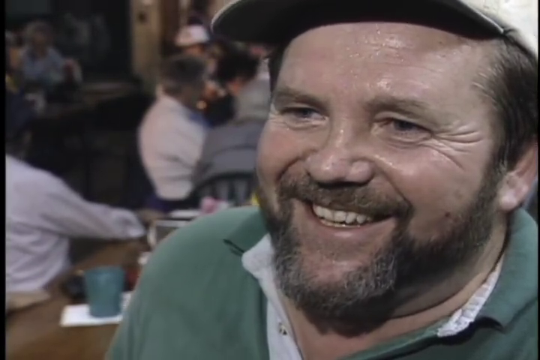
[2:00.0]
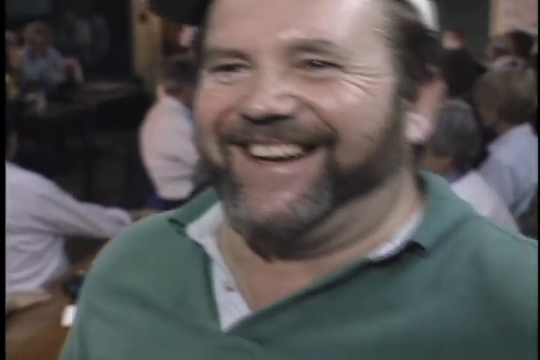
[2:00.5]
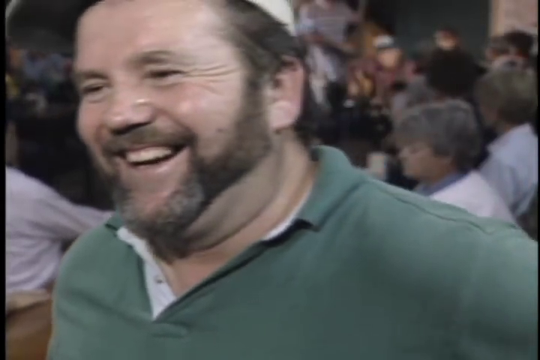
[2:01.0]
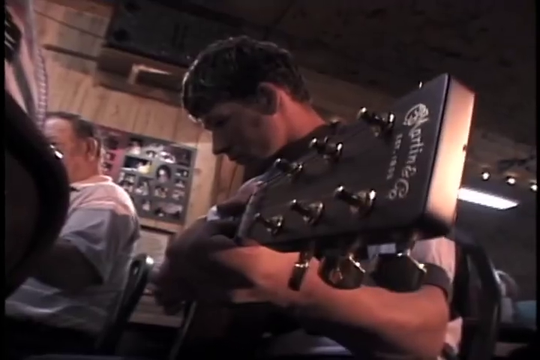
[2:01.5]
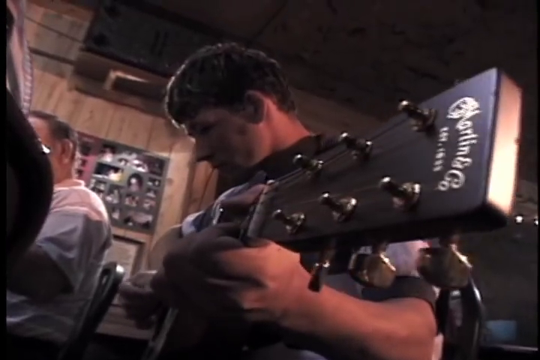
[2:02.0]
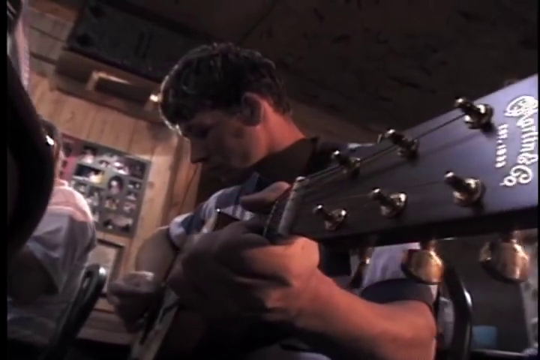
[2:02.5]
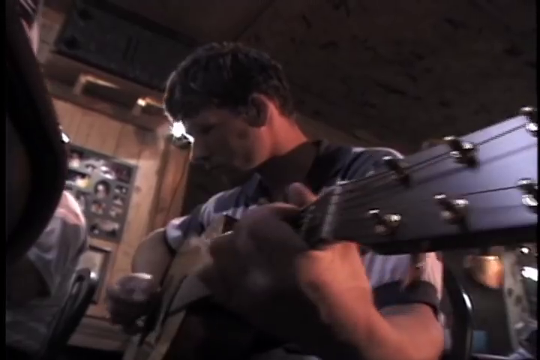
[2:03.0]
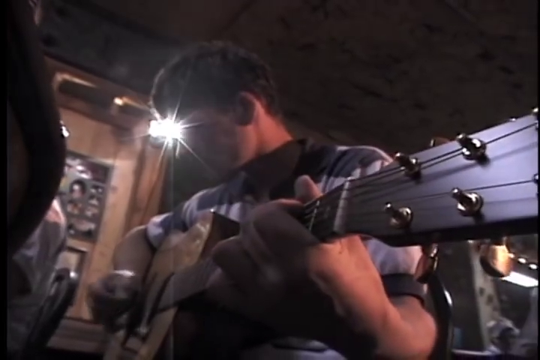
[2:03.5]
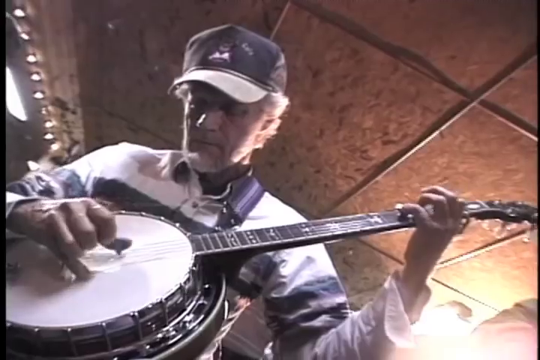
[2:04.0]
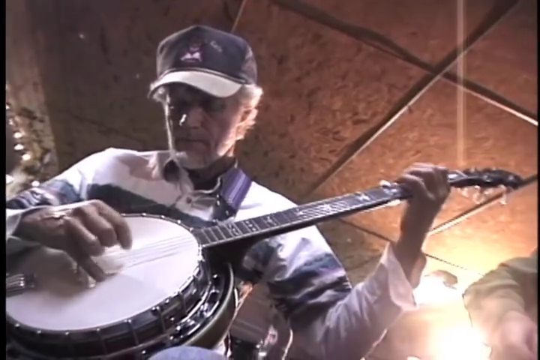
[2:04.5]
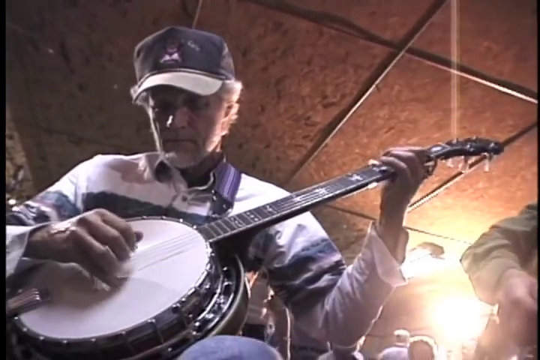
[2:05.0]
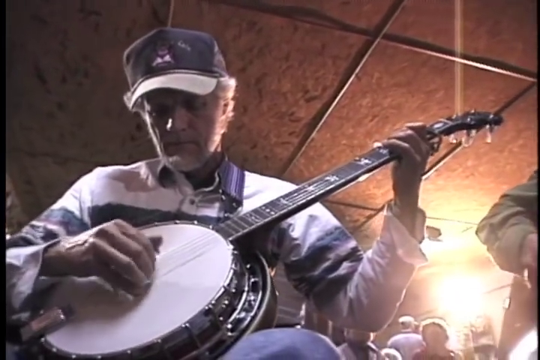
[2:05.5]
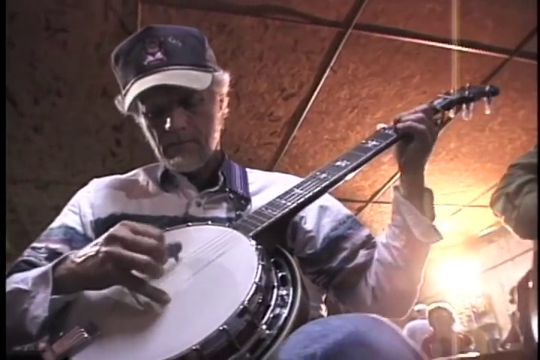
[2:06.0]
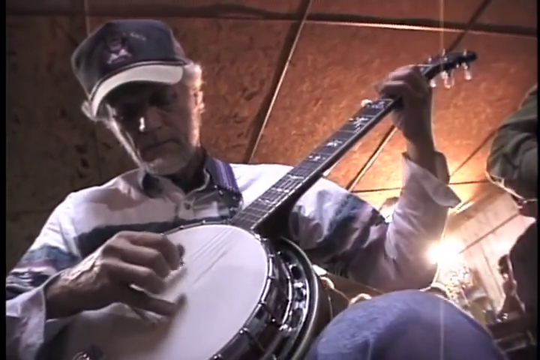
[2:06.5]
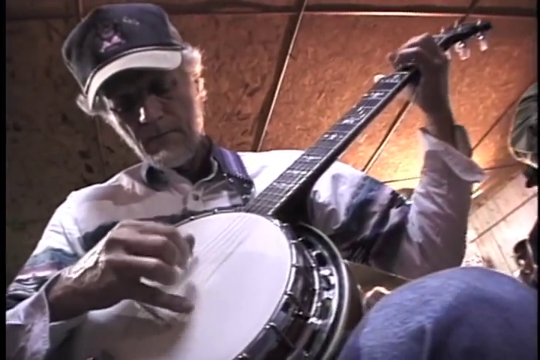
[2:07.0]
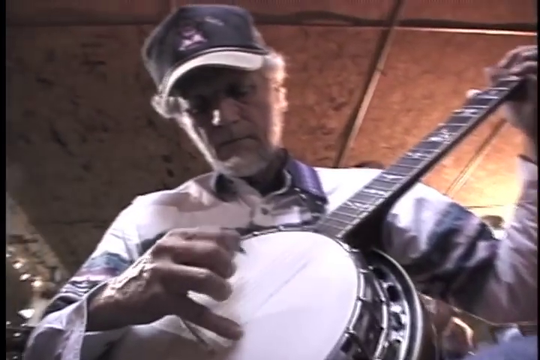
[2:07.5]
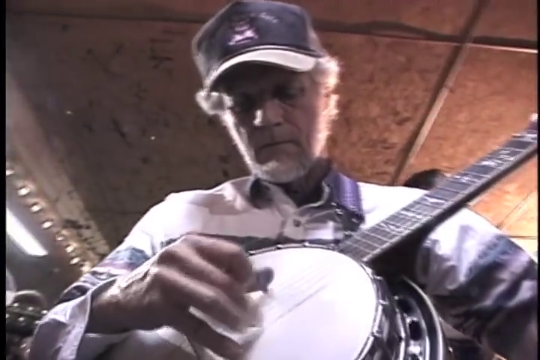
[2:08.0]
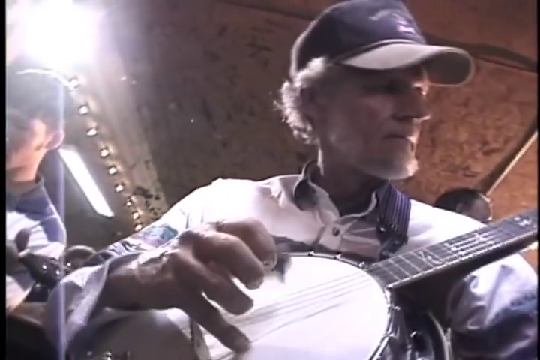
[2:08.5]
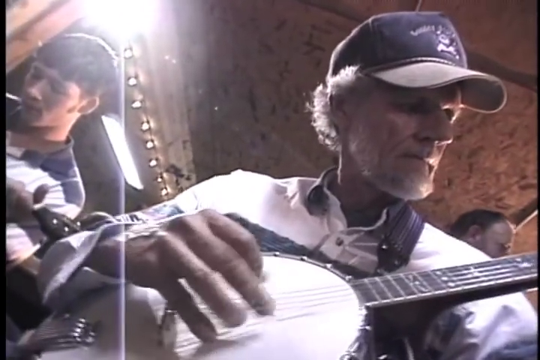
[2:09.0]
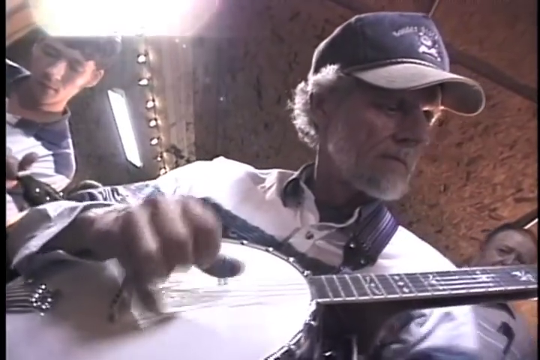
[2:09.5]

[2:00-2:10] The man in the green polo shirt appears again; his collar is a v-neck with white trim. He is bearded and laughs with whoever he is speaking to. Starting with a smile, he begins to laugh and moves his upper body shoulder first, his head moving from the right of the screen to the left or nearly to the left side. Next, another individual leans over a guitar and plays, then a man in a peaked cap plays a banjo with his fingers rather than plucking with a covered thumb. The finger movements are intricate: the little finger is generally not involved, but the three middle fingers seem all to be in use plucking the strings.